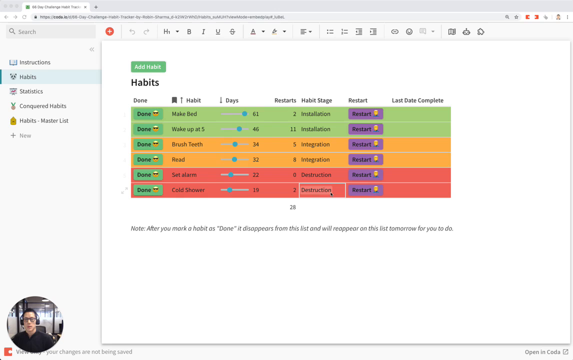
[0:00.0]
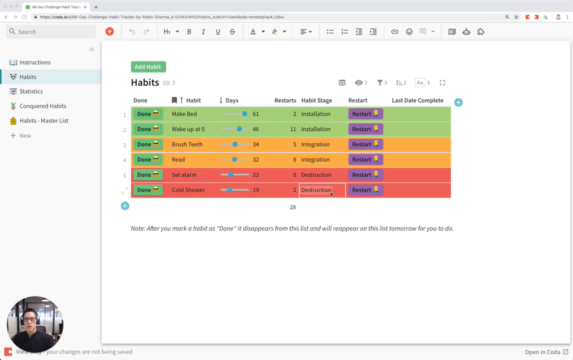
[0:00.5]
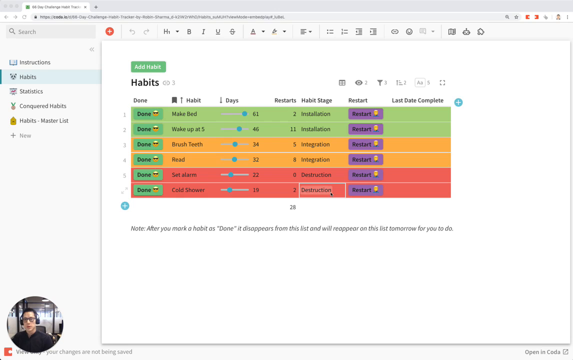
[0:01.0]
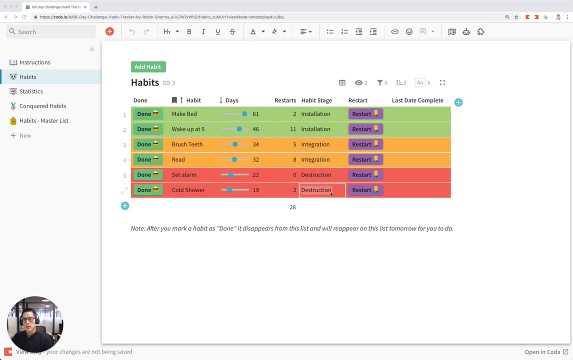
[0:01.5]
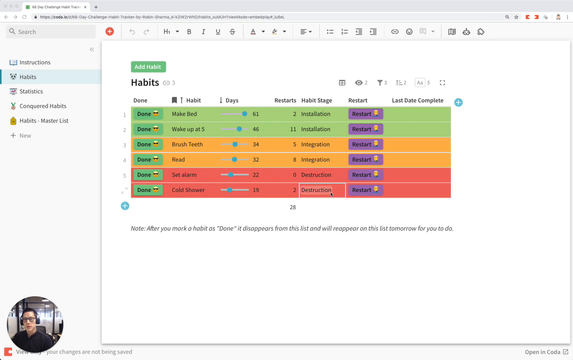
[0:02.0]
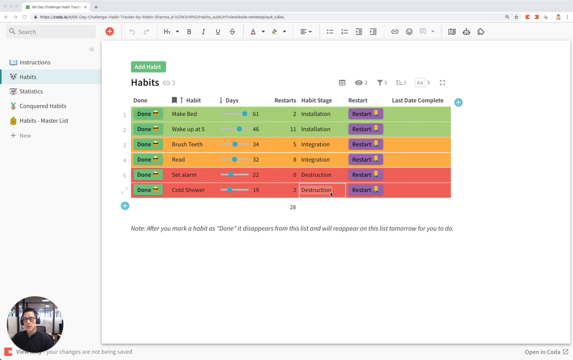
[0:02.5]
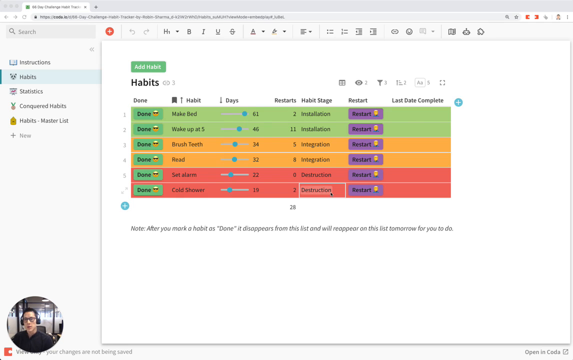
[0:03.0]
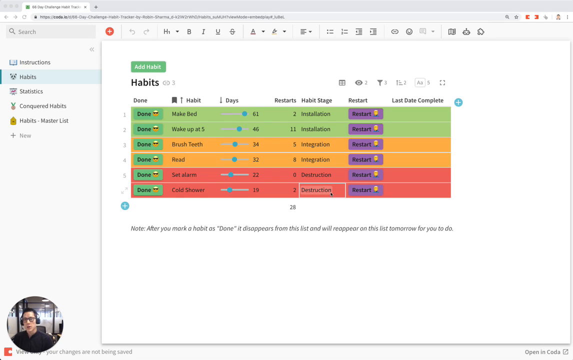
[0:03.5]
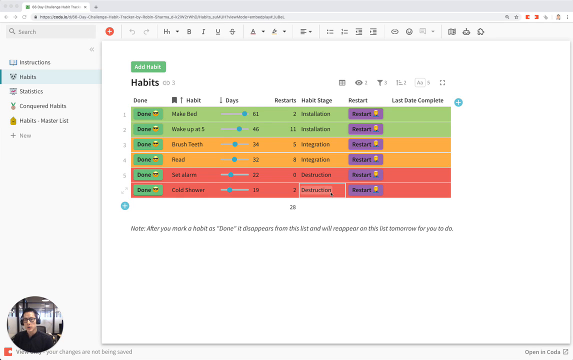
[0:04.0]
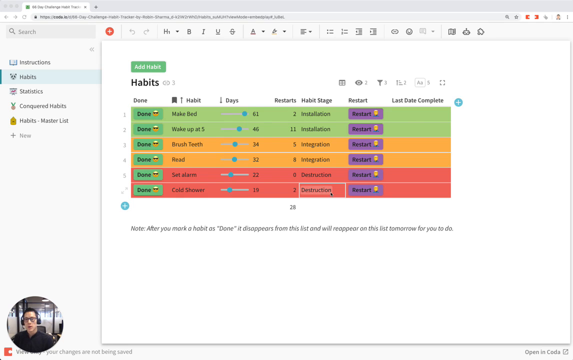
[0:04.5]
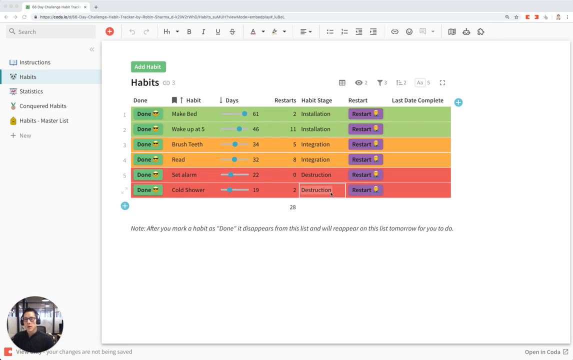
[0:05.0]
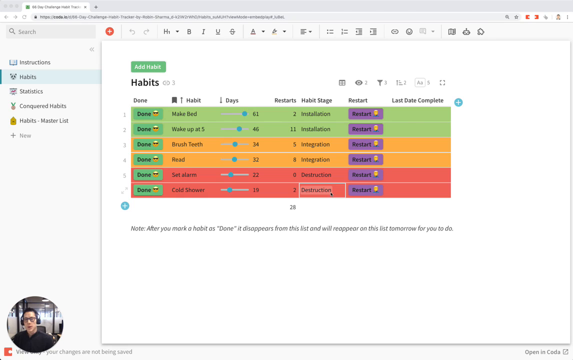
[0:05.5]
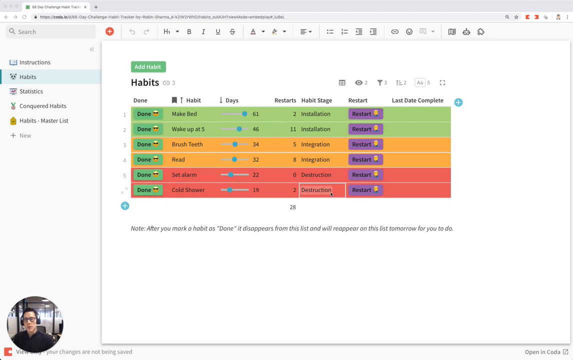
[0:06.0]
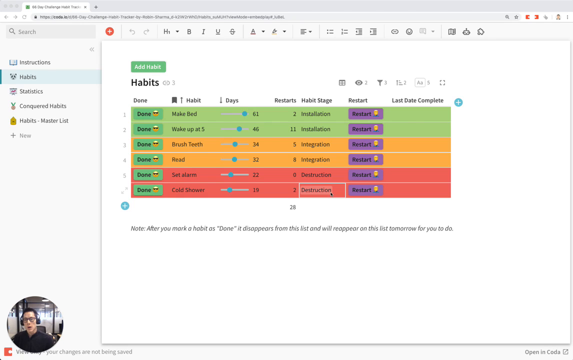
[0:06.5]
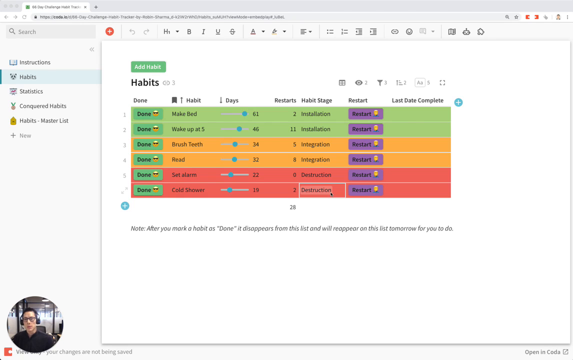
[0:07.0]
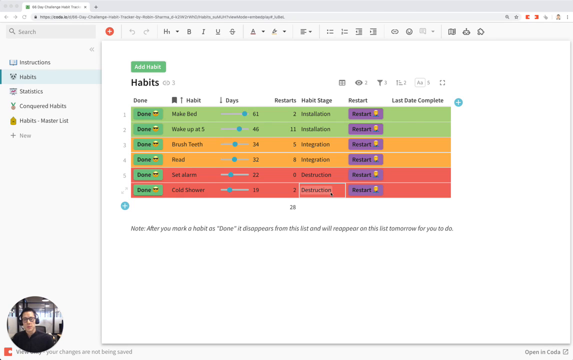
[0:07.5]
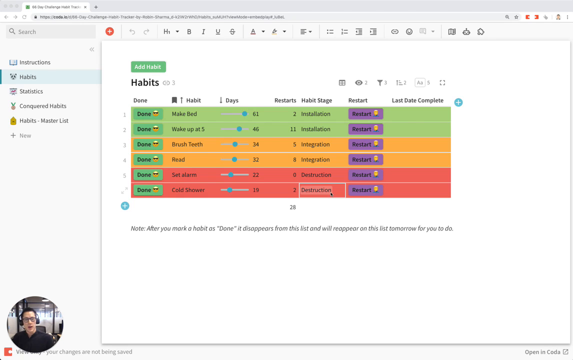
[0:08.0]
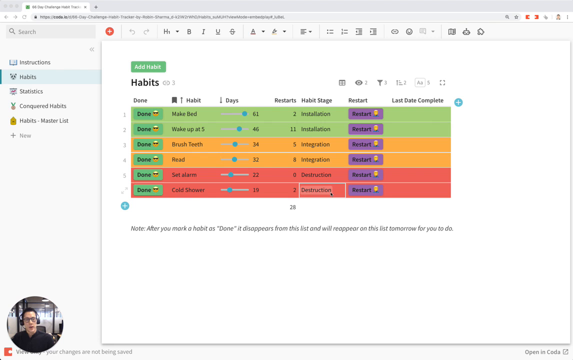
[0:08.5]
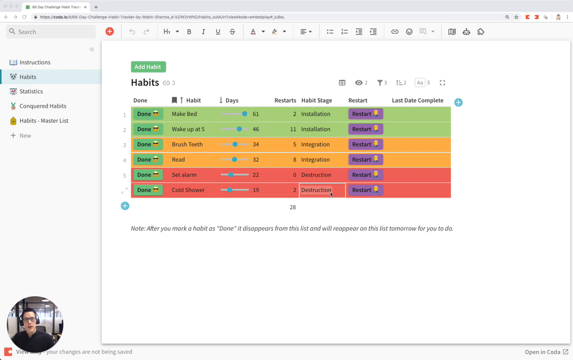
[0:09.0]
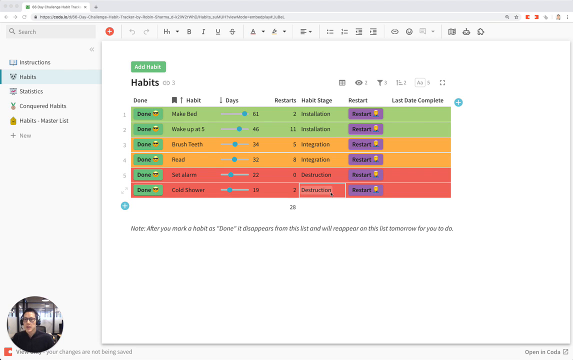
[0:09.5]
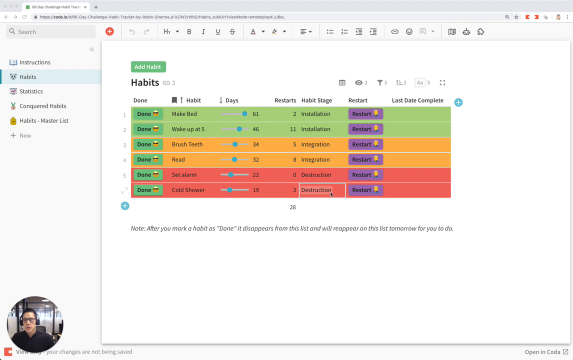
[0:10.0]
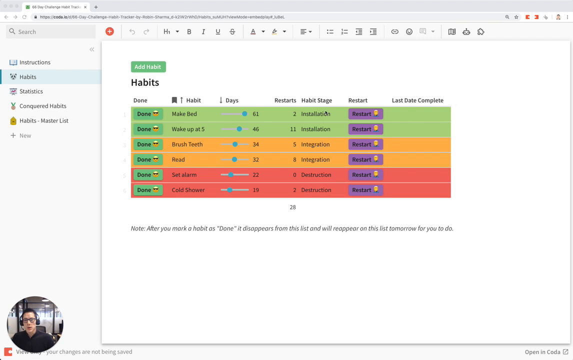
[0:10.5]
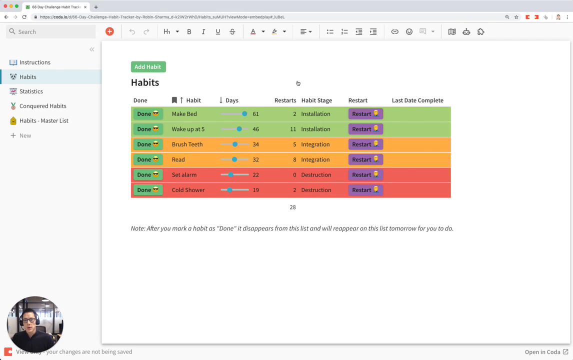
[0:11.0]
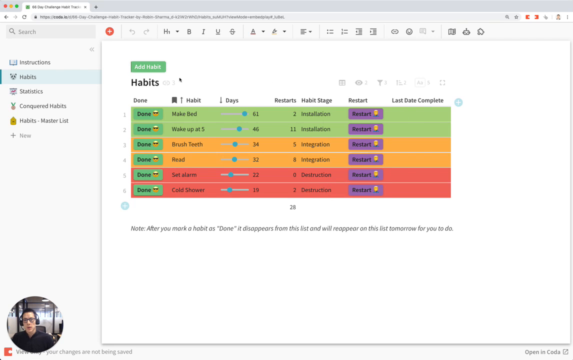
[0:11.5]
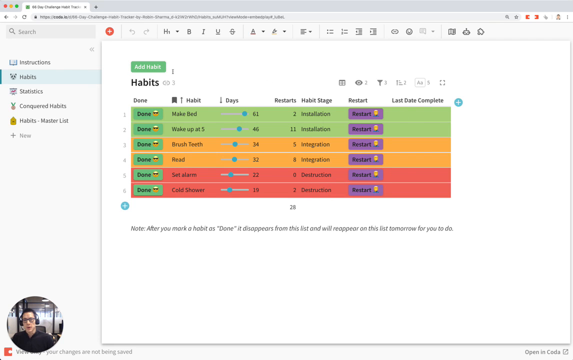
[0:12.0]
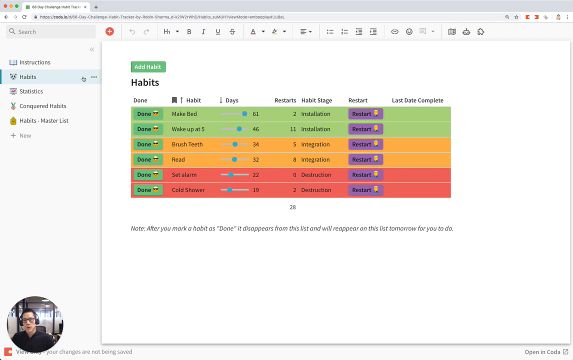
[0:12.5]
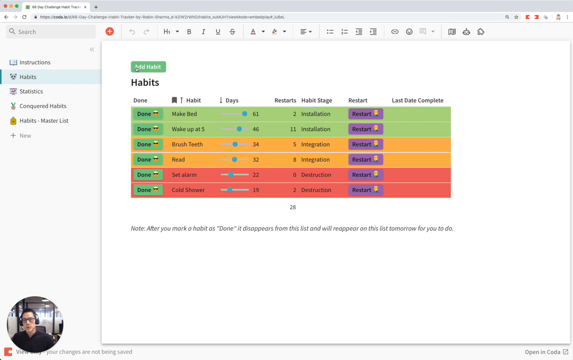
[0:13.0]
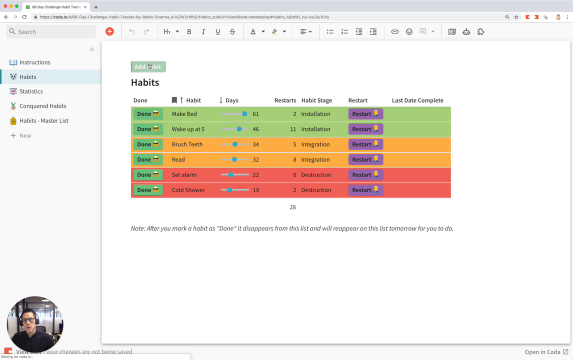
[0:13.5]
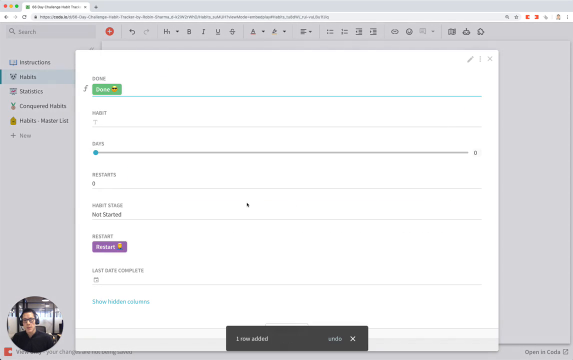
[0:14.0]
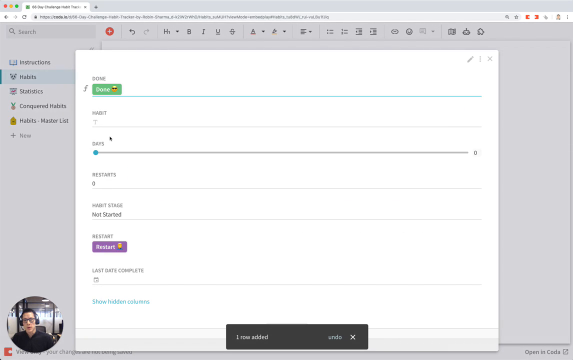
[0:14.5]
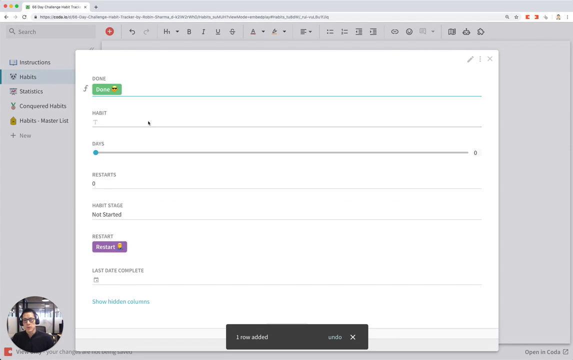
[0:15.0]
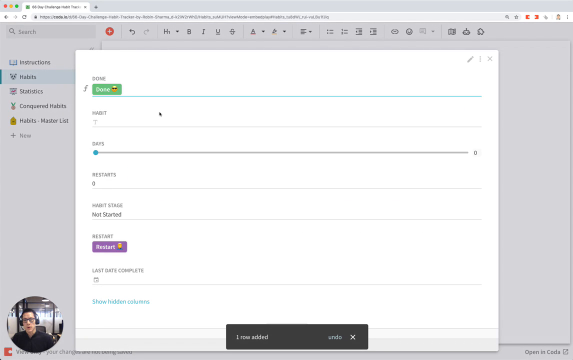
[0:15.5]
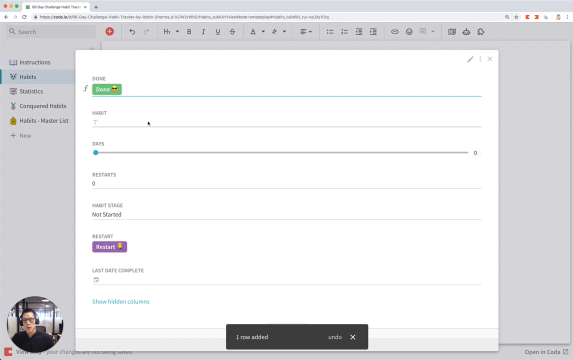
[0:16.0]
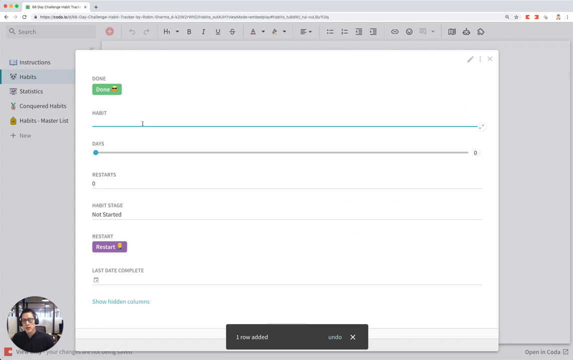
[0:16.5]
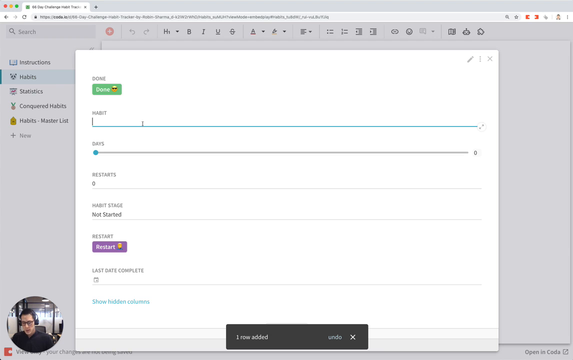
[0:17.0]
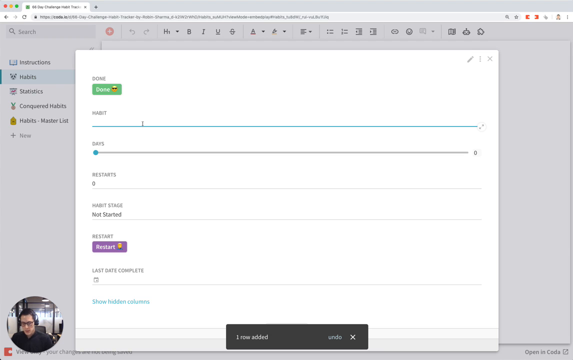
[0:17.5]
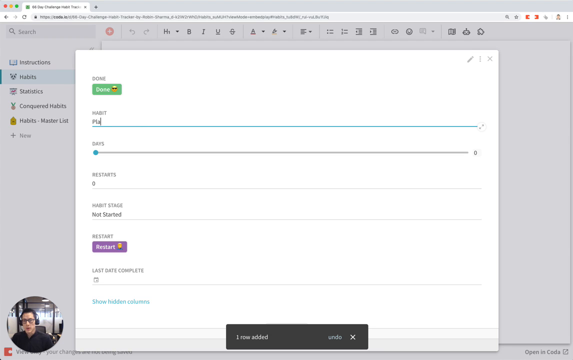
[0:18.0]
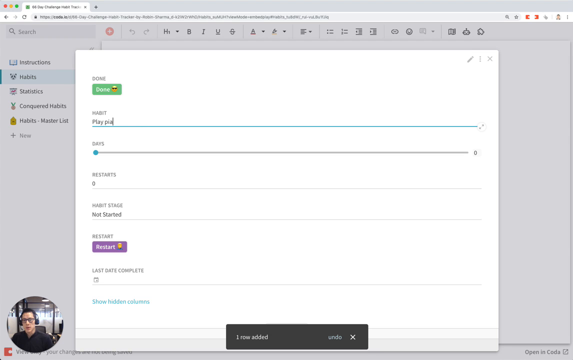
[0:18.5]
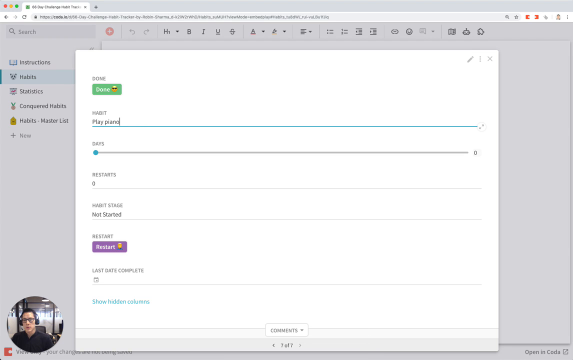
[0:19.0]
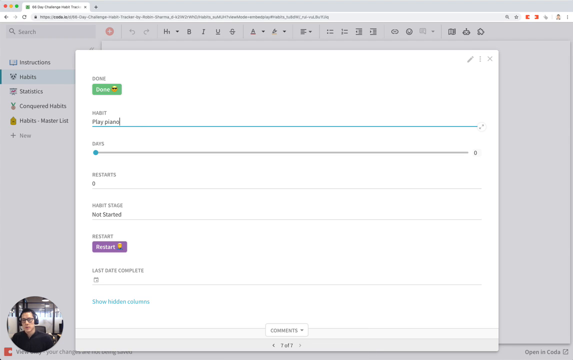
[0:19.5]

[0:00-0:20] A green circle appears, seemingly a person recording himself, on a web page with "Habit Tracker" at the top left. In the center of the screen a variety of graphics depict the various habits, with multiple layers of text. Along the very top are the headings "days, habit, days, restarts, habits, stage, restart, last date, completed". Below that are colored lines in light green, light orange and light red, and habits such as make bed seem to be at the top. There is a slider with 62, 46, 32, 22, 19, and restarts reading 2, 11, 5, 8, 0, 2. At the very bottom of the screen it looks like it says "28". In the top left-hand corner, the person clicks the add habit button, and a screen pops up showing "done" at the top with a smile and a sunglasses emoji, and the text "habit play piano". They appear to be adding that habit.